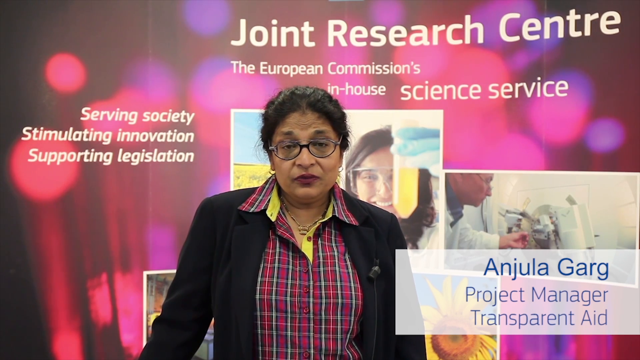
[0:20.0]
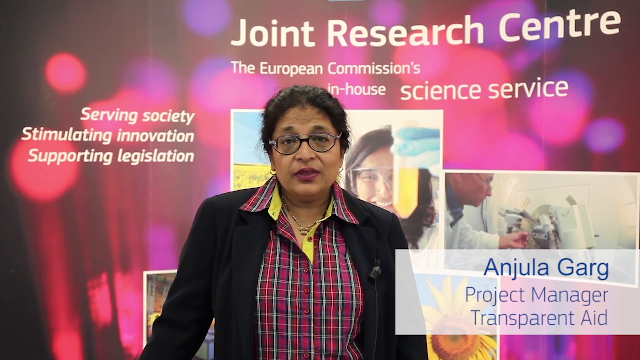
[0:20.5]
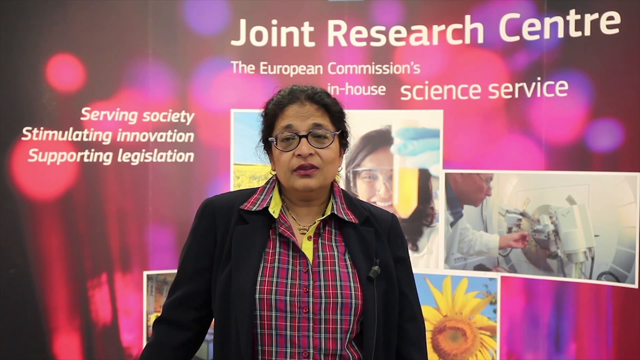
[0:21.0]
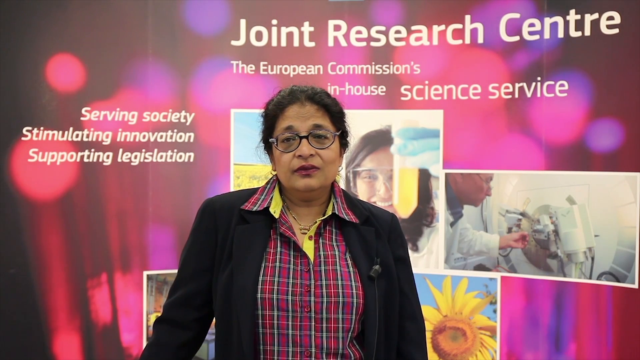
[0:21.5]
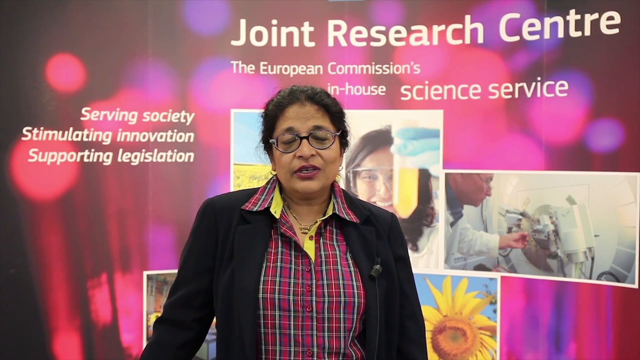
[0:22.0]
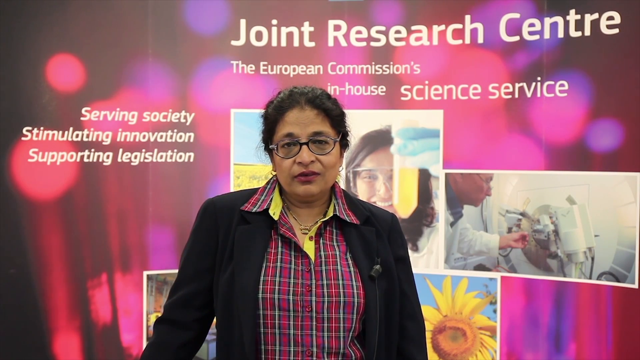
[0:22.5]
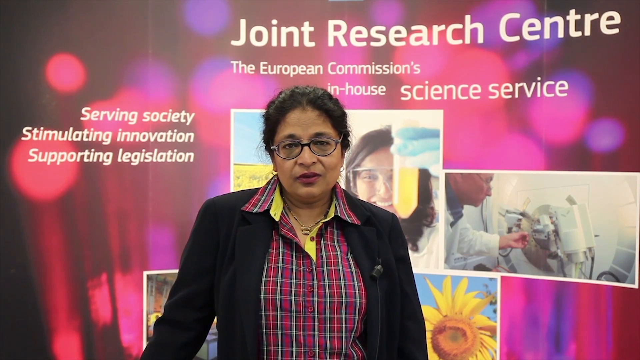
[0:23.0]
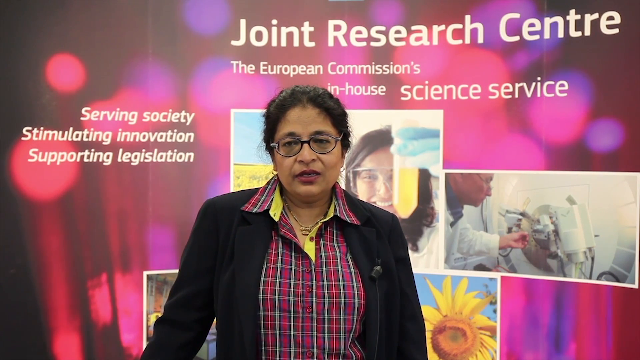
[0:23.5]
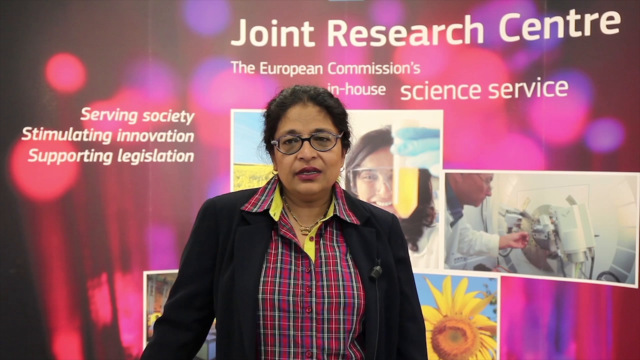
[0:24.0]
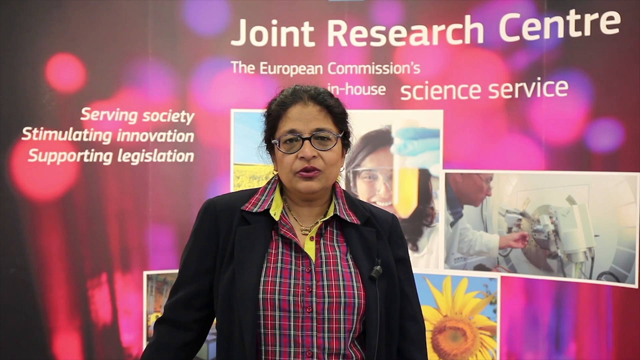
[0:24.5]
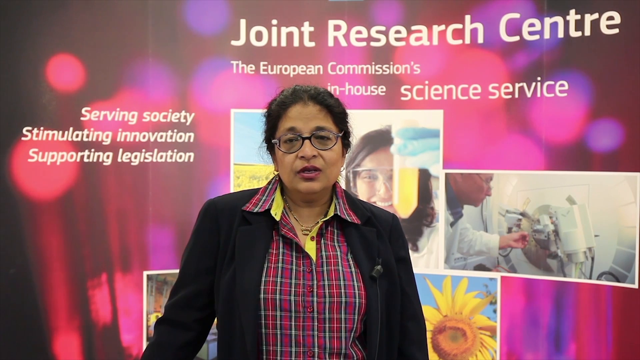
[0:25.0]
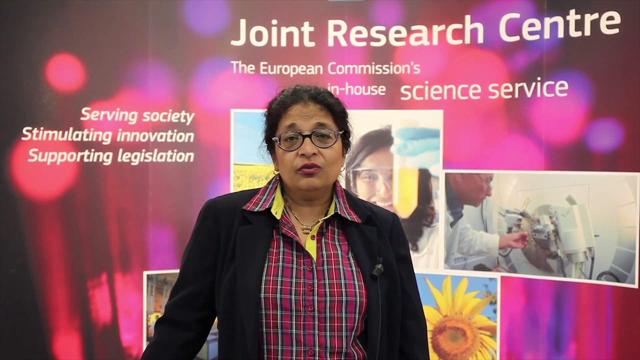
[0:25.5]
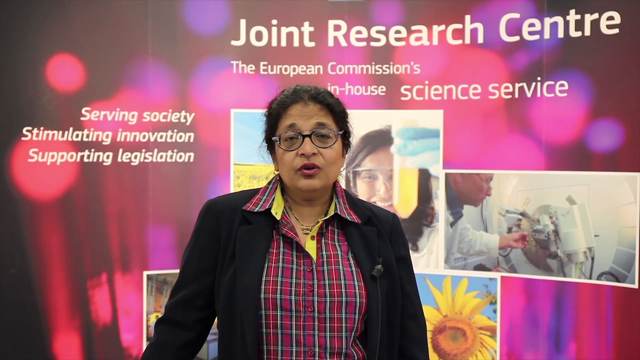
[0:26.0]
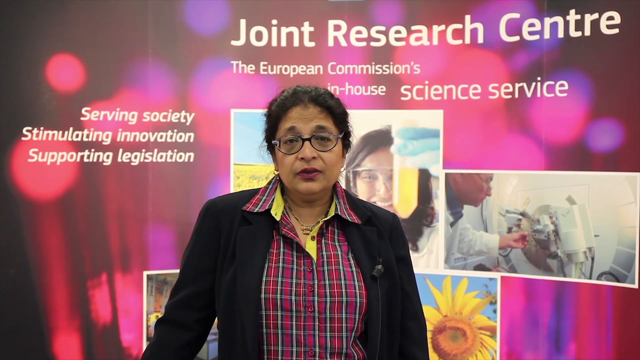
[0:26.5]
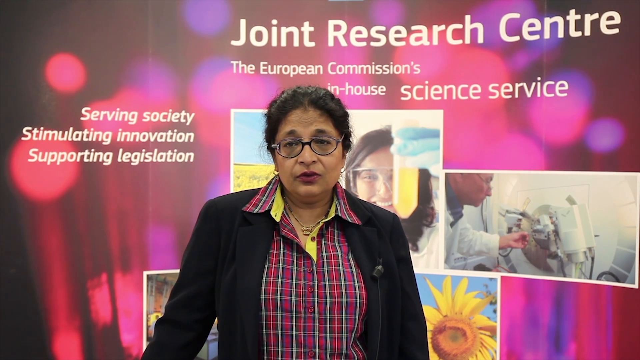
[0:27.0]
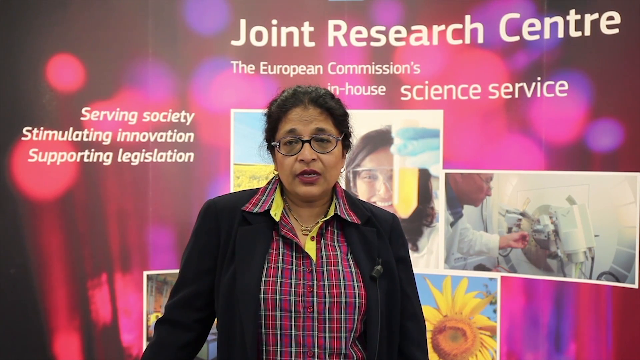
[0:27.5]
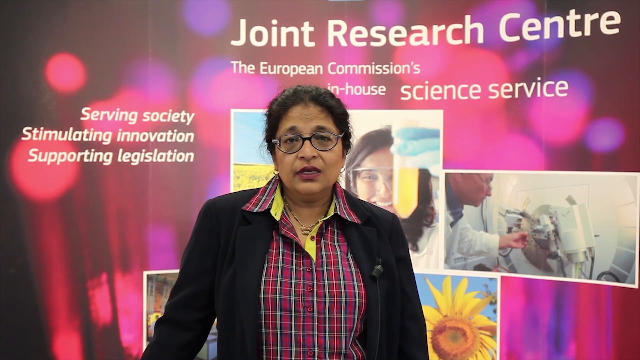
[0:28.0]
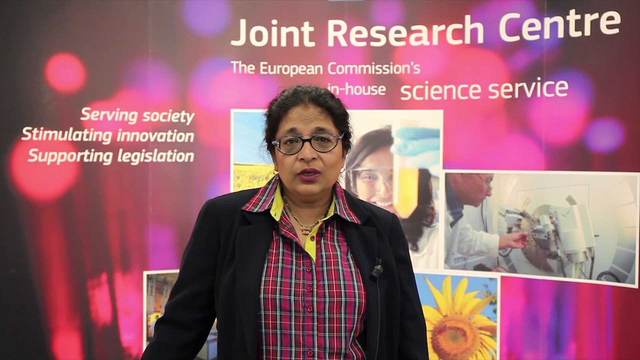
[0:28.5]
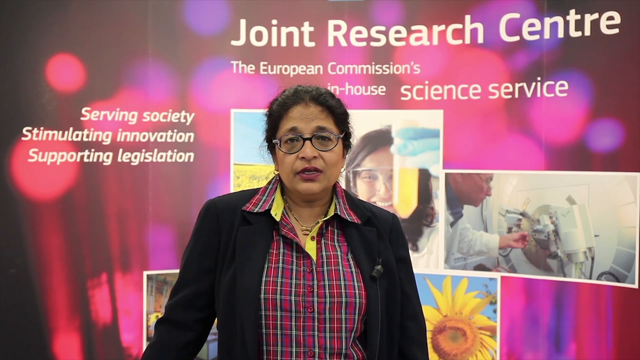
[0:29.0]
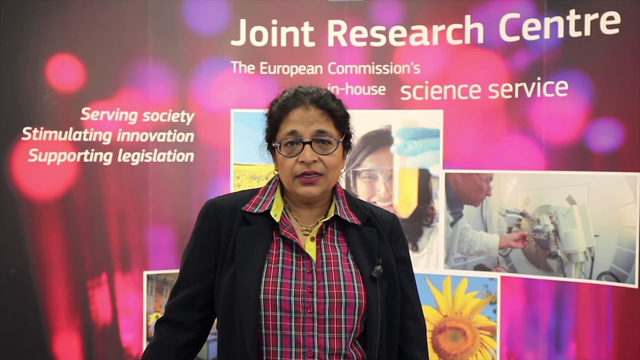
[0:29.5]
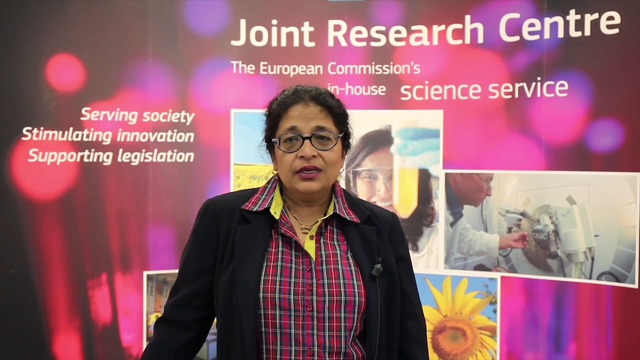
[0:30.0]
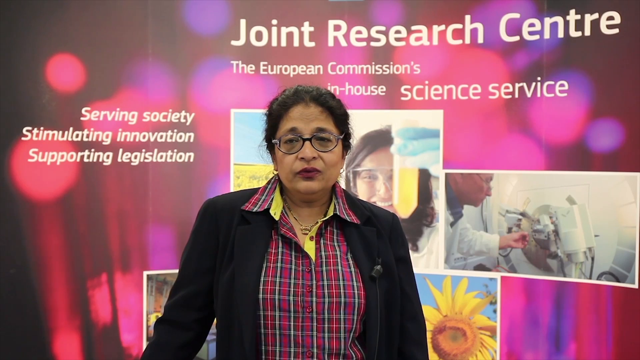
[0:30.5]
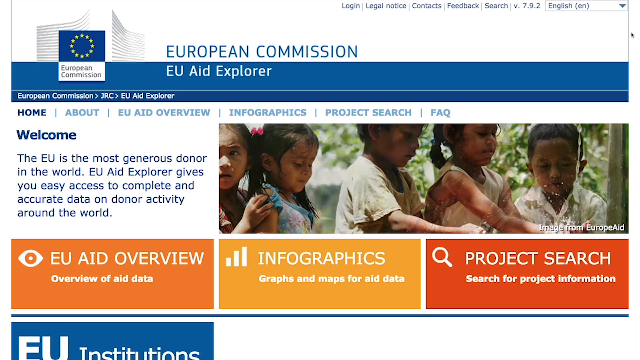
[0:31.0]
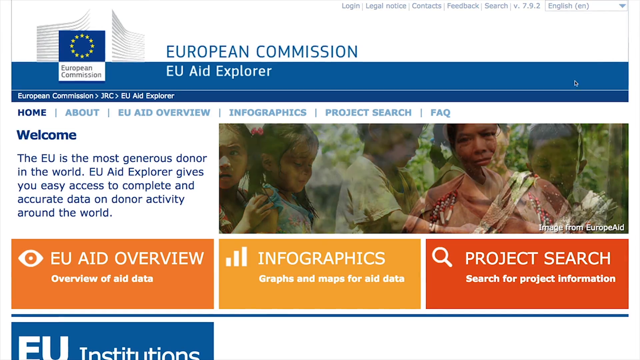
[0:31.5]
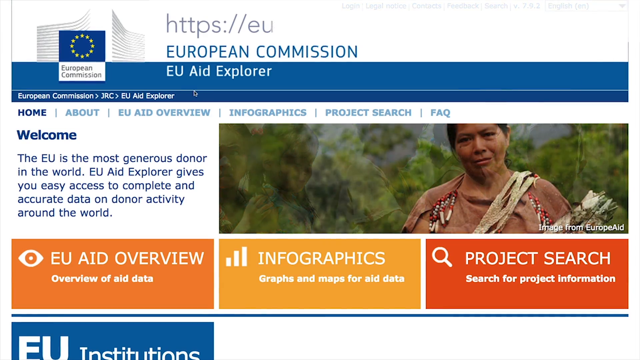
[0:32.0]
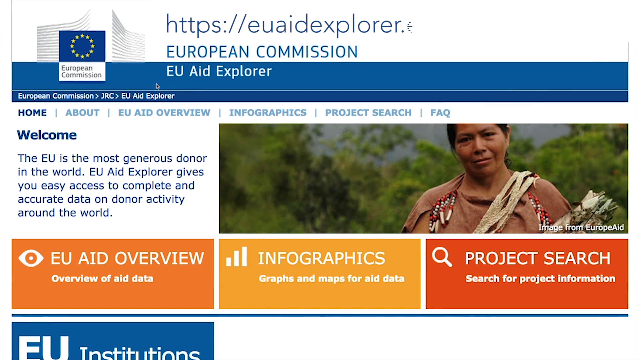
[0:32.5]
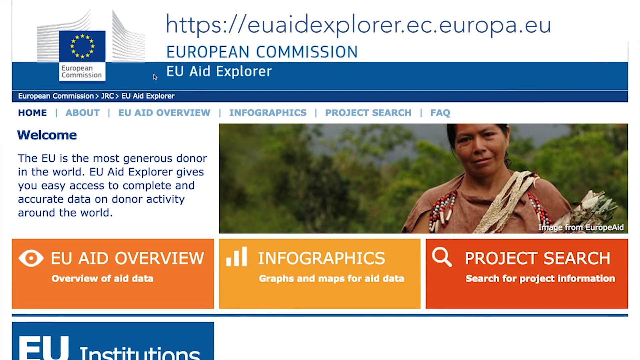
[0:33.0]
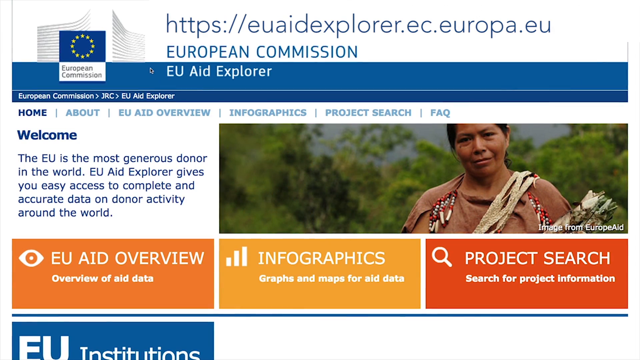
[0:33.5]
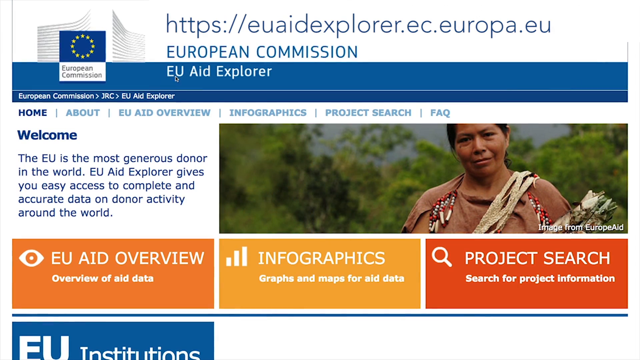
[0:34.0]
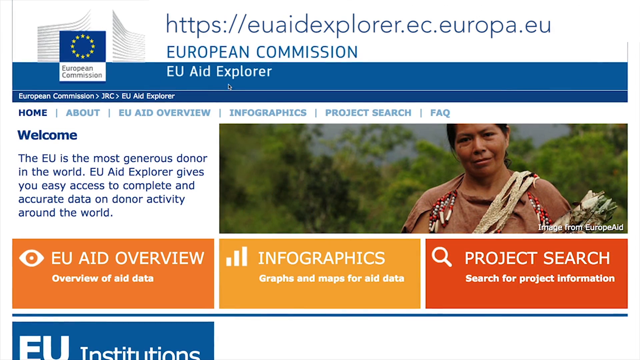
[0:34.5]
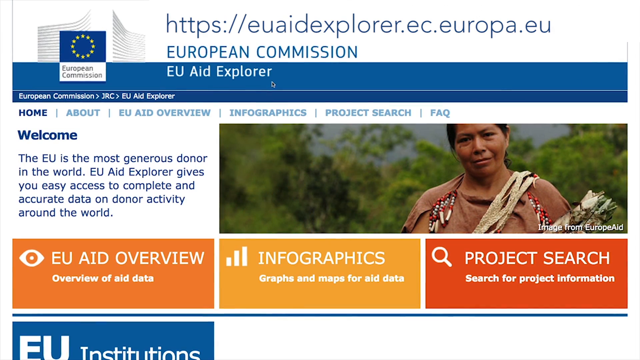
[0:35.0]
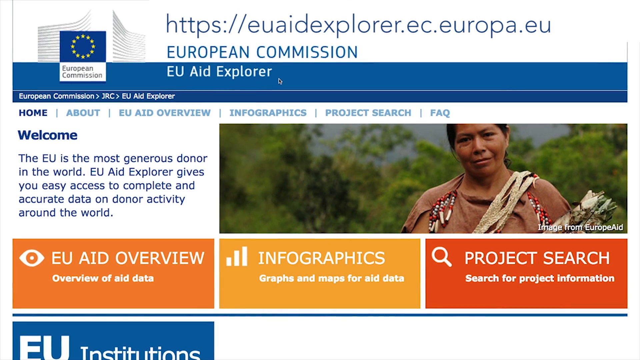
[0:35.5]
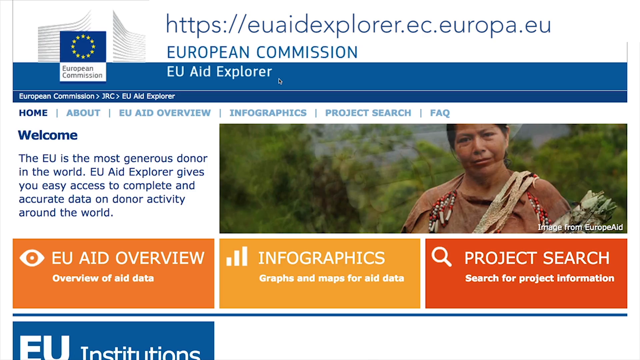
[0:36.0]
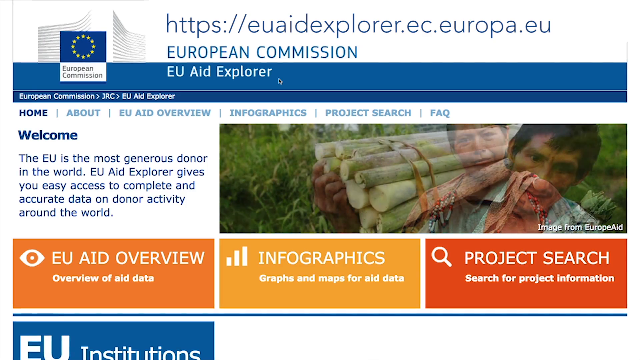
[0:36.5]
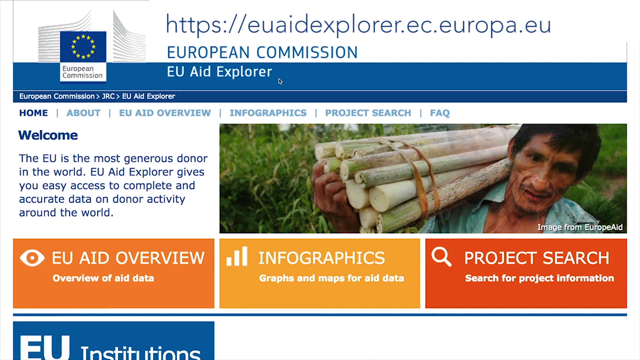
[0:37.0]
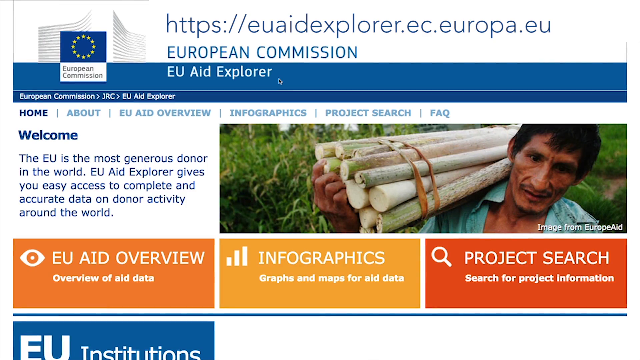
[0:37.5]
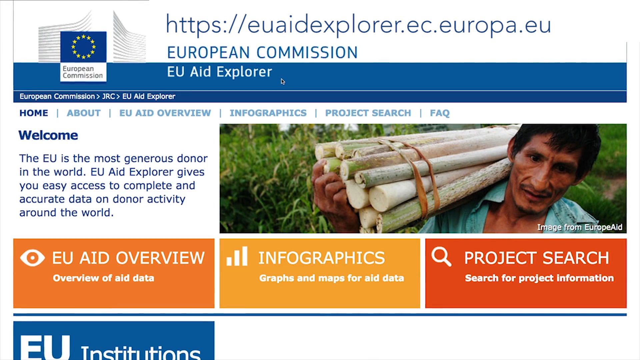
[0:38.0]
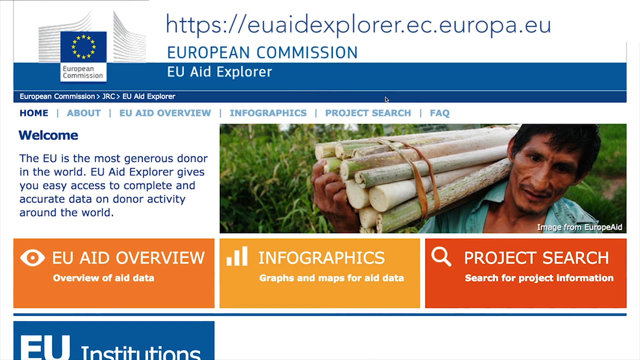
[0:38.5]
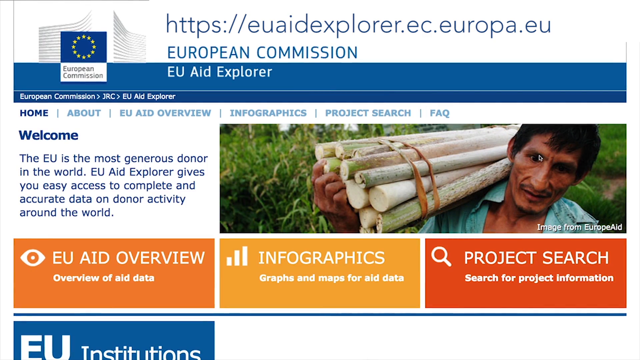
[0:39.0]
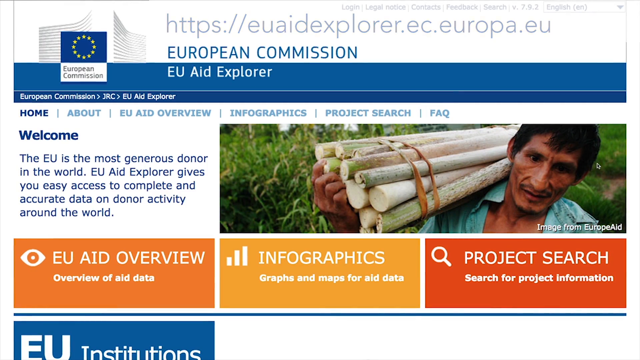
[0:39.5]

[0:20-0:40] An Indian woman wears a plaid shirt, red with yellow on the collar, and a black sweater. Text identifies her as "Anjula Garg," with a title beginning "Project" and "Transparent Aid." To her left, superimposed in the background, text reads "serving society, stimulating innovation, supporting legislation," and above her it reads "Joint Research Center, the European Commission's in-house science service." She wears glasses, has her hair pulled back in a bun, and wears red lipstick. There are four pictures behind her, including a lady with a test tube and a sunflower. The picture then switches to one reading "EU Aid Explorer," with a brief glimpse of someone in the developing world. Text reads "the EU is the most generous donor in the world" and "EU Aid," and then the shot cuts off.